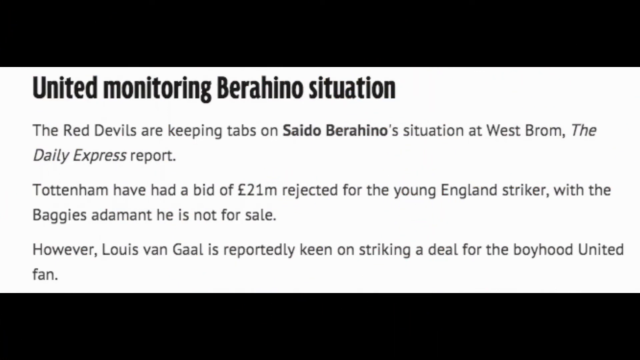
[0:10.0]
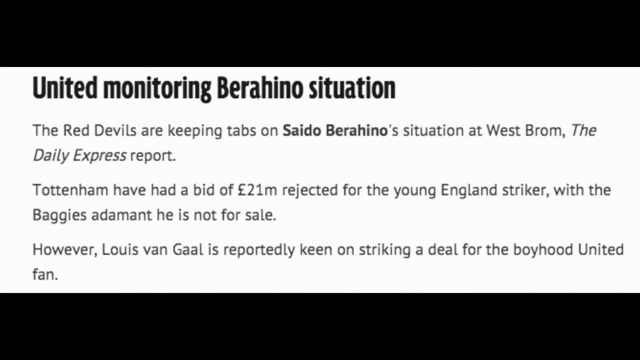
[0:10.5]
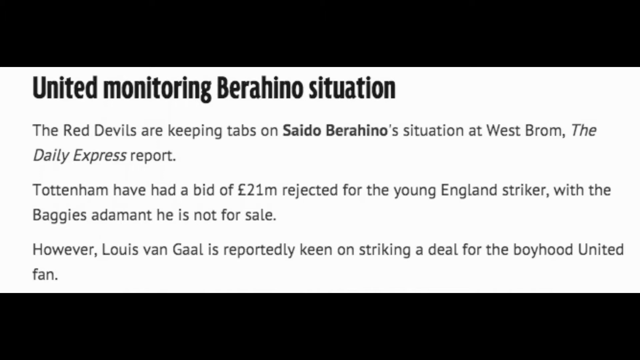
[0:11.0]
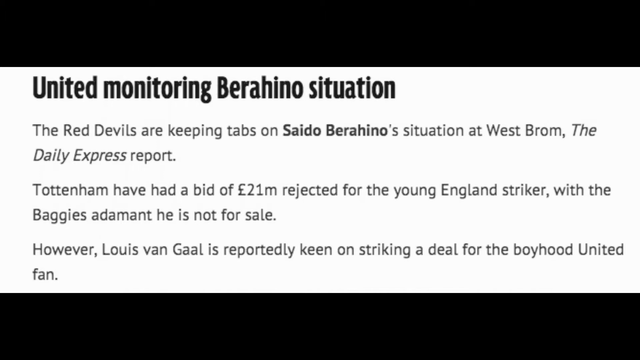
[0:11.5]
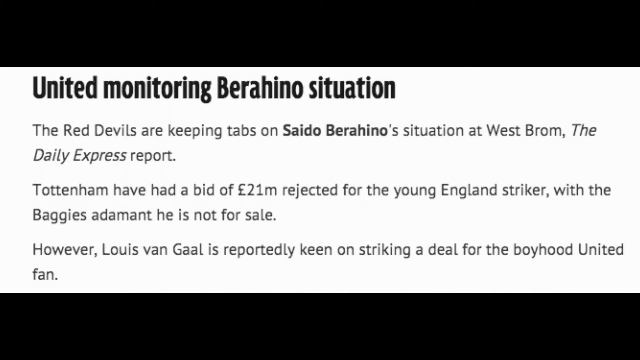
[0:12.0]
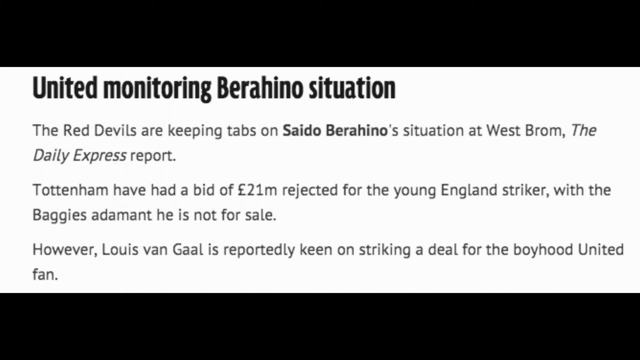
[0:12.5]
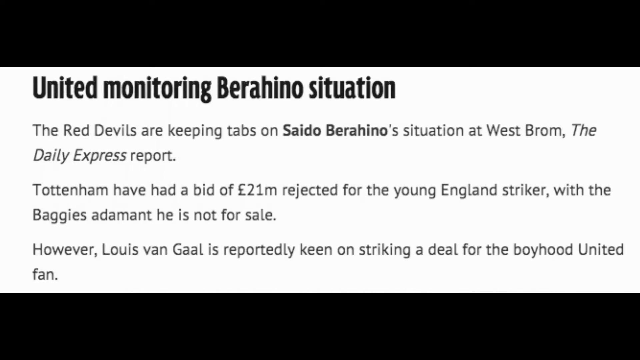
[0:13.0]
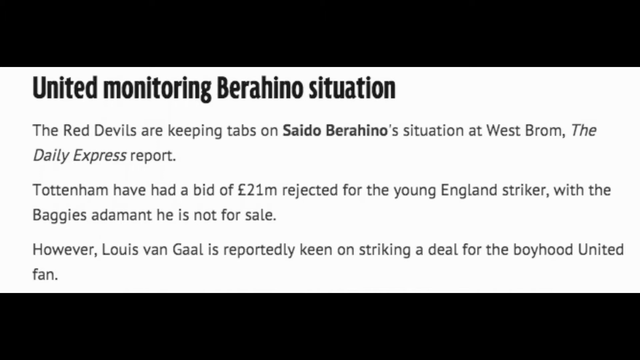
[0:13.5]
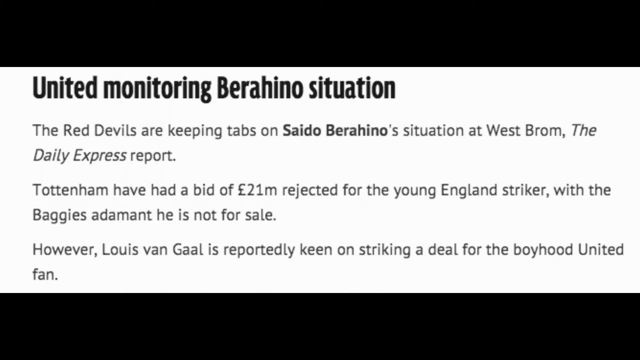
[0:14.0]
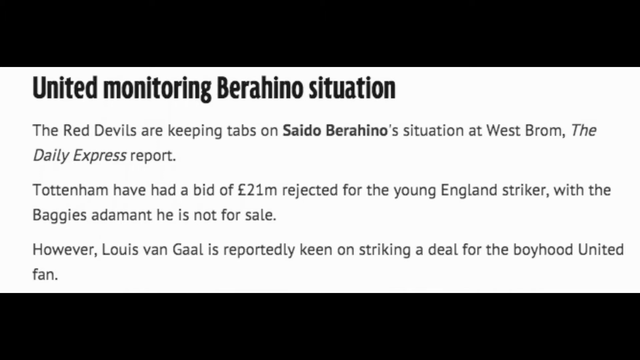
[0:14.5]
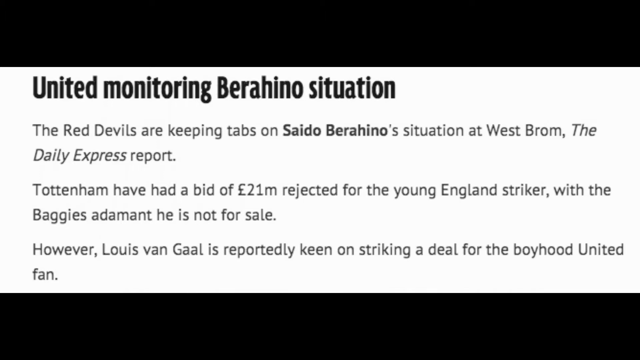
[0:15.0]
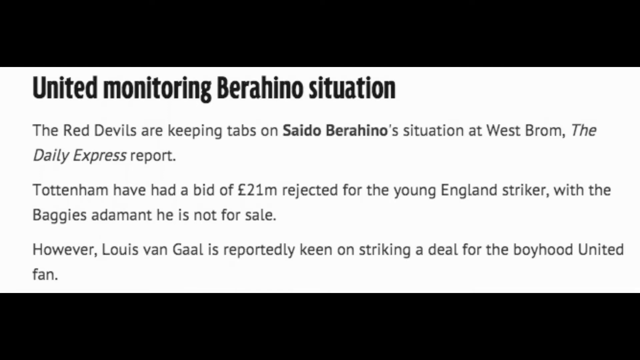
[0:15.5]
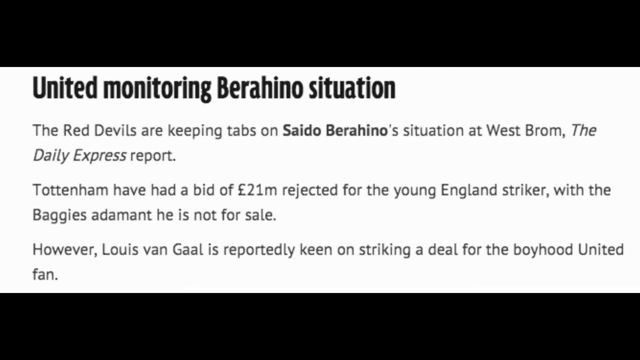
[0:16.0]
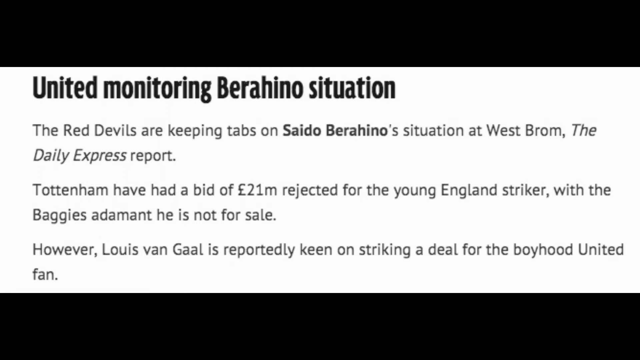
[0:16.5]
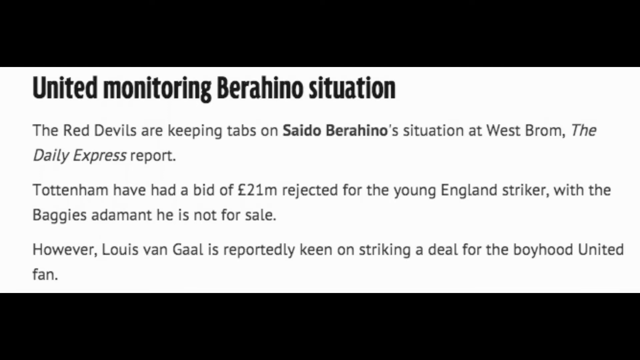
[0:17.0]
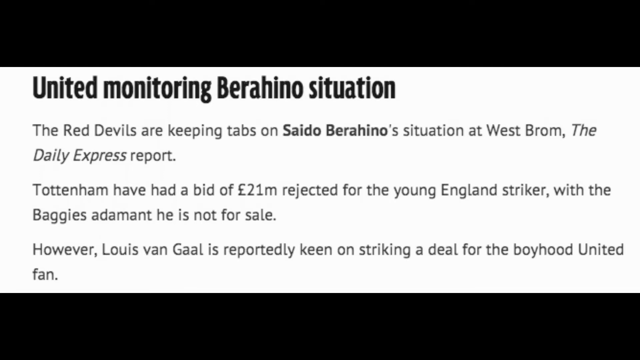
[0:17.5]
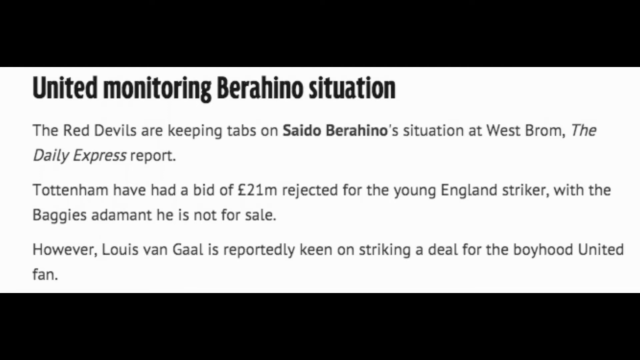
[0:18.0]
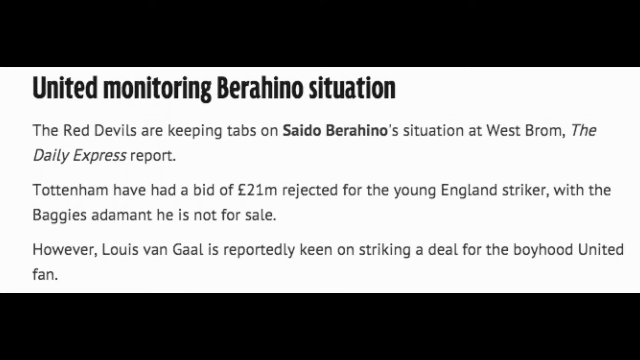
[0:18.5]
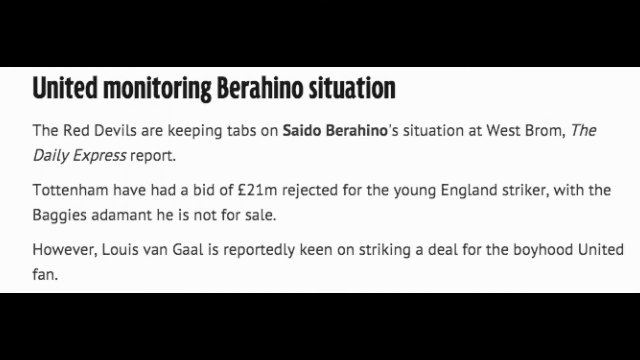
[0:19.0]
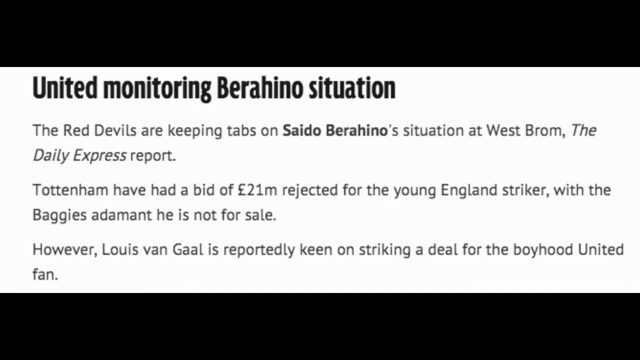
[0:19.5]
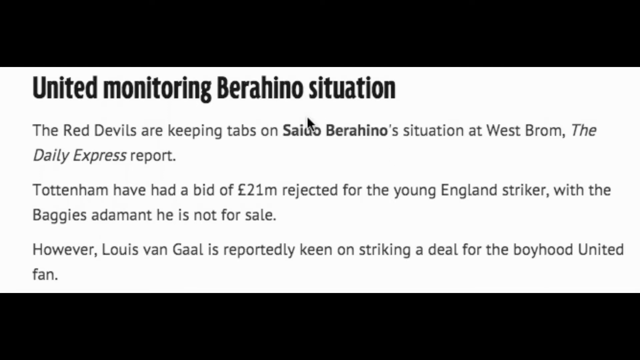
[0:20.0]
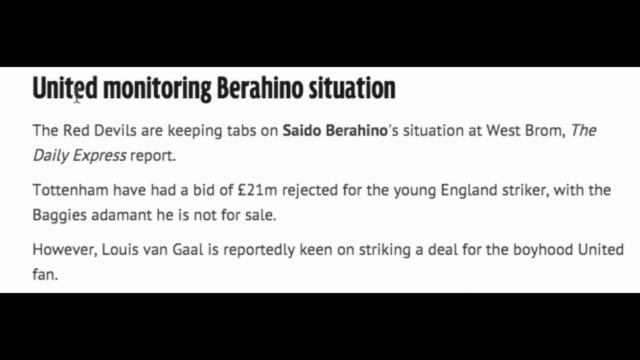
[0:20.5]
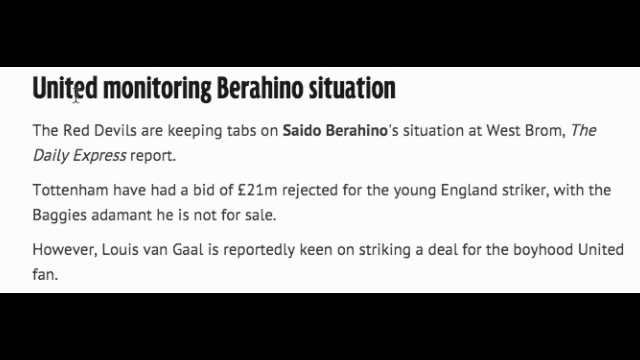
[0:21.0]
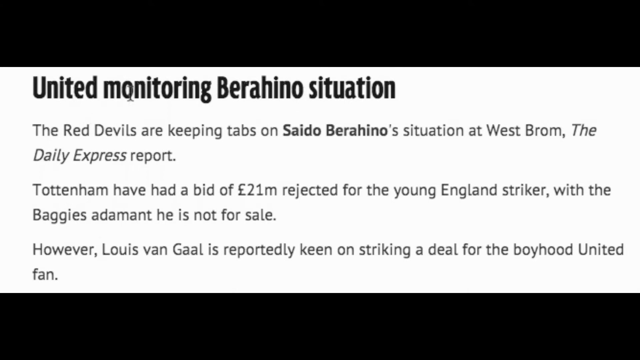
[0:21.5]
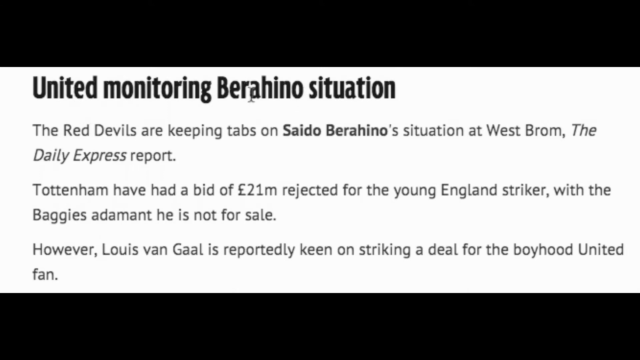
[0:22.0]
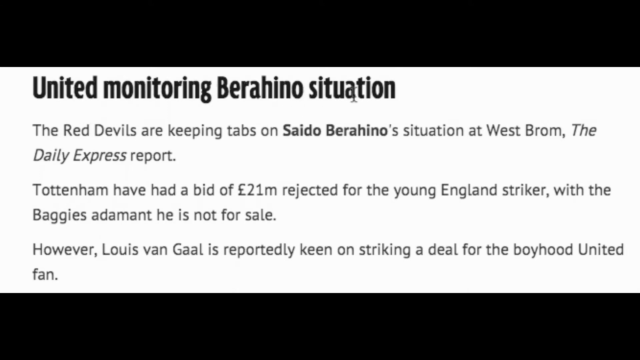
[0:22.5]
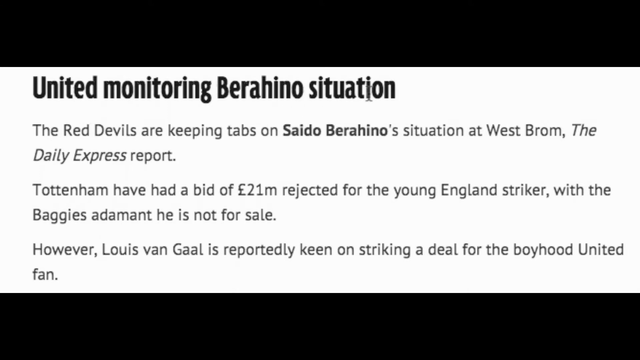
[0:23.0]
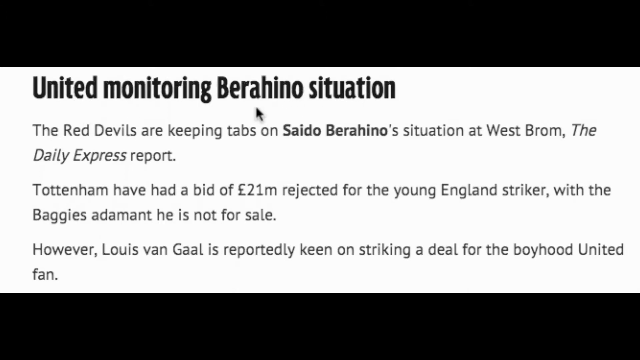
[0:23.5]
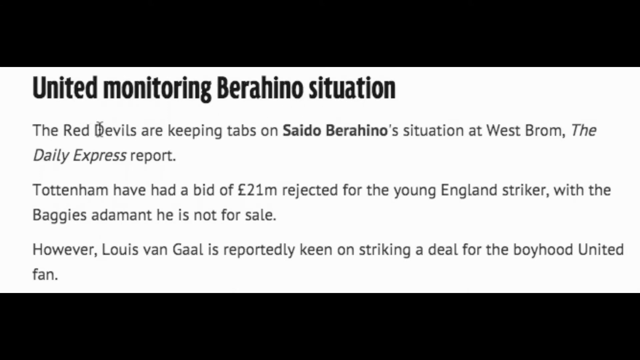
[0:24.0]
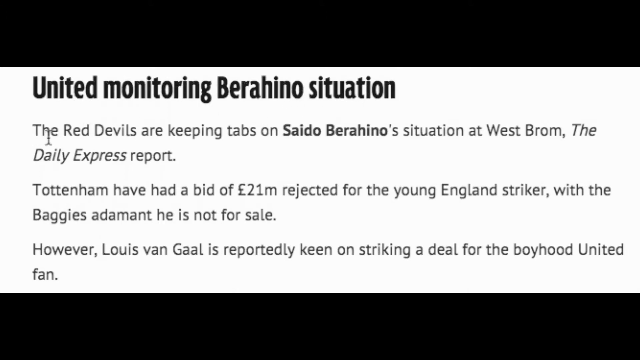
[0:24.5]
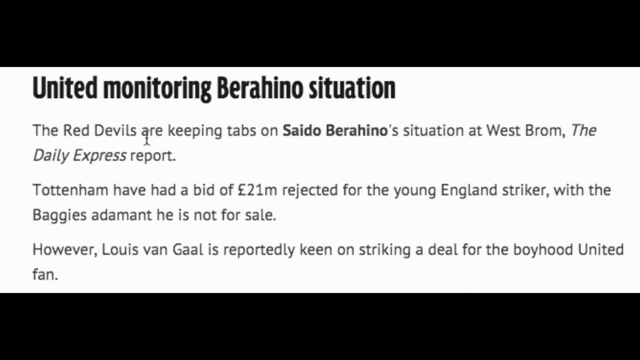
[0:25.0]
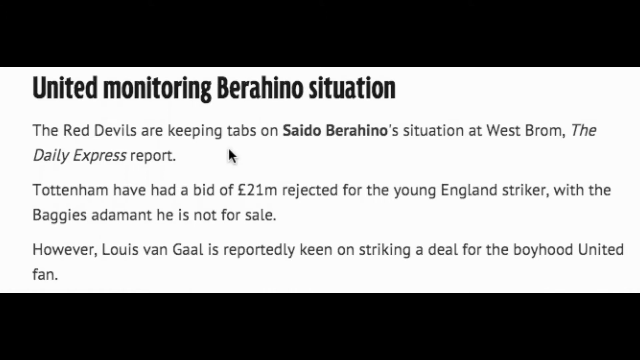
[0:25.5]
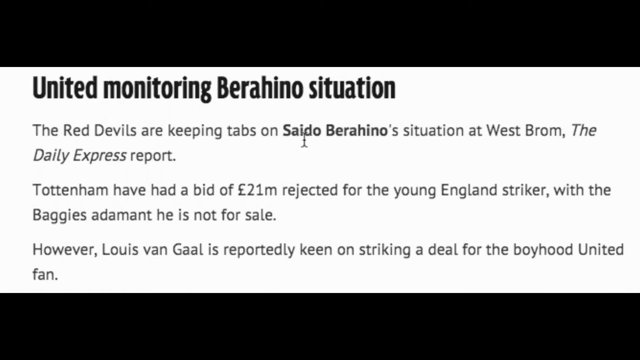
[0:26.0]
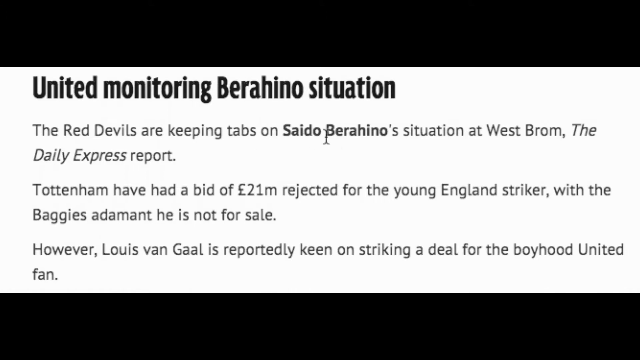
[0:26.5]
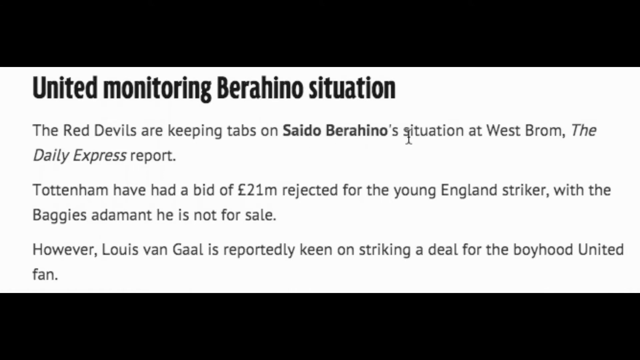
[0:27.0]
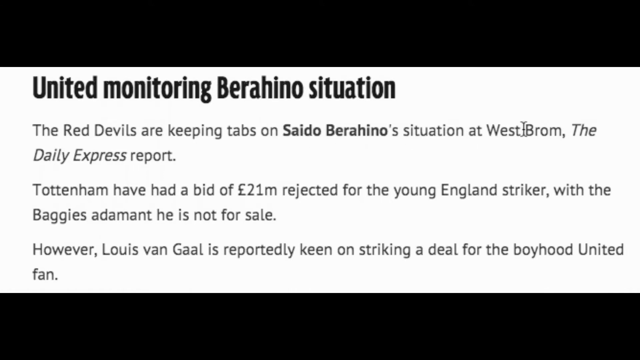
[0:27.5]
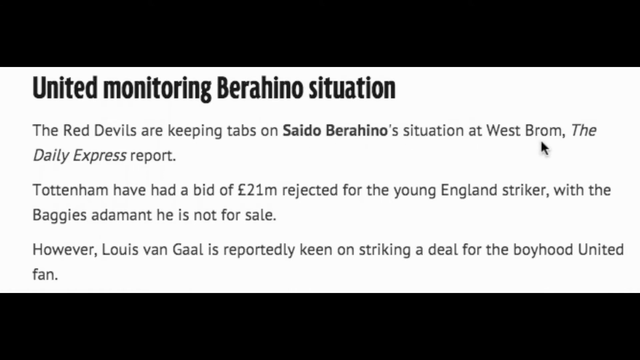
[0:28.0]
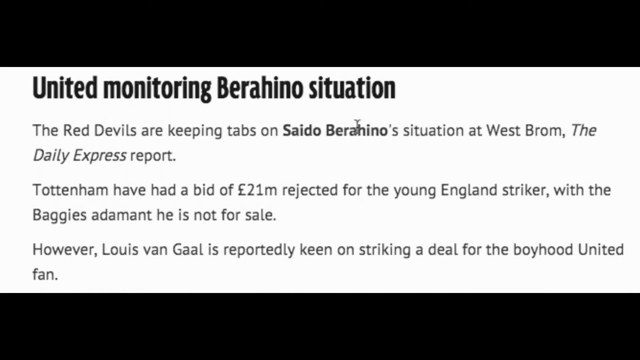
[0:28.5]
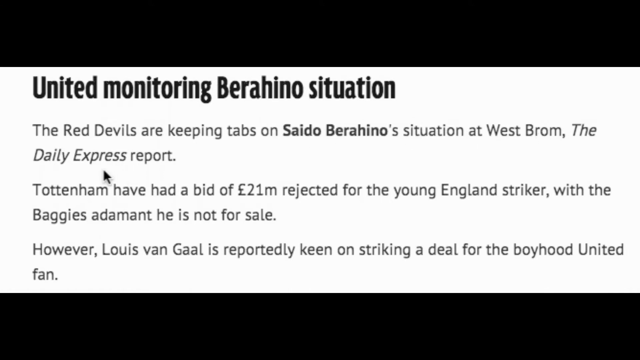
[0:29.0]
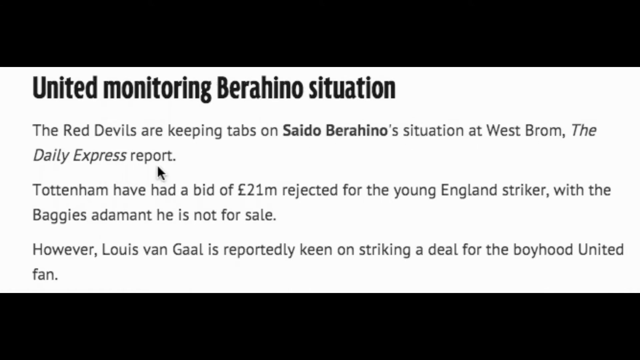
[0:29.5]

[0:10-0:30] The screen has a black background with a black bar at the top and bottom and a white background in front. Black text sits at the center of the screen, and the title at the top reads "United Monitoring Barahino Situation." Below it the text reads "The Red Devils are keeping tabs on SIDO Barahino Situation at West Brom, the Daily Express Report," with "SIDO Barahino" in bold. Another sentence reads "Tote and Tom have had a bid of 21 million pounds rejected for the young England striker with the baggies adamant he is not for sale." A final sentence reads "However, Louis van Gaal is reportedly keen on striking a deal for the boyhood United fan." Each sentence is separated by a space. The page lingers on the text for several seconds, then a cursor moves across the screen from the far right to the left and hovers around the title at the top. The cursor crosses the title text and moves into the first sentence of the main text, bobbing back and forth from left to right, word to word, as if the person using it is reading each word along with the cursor.